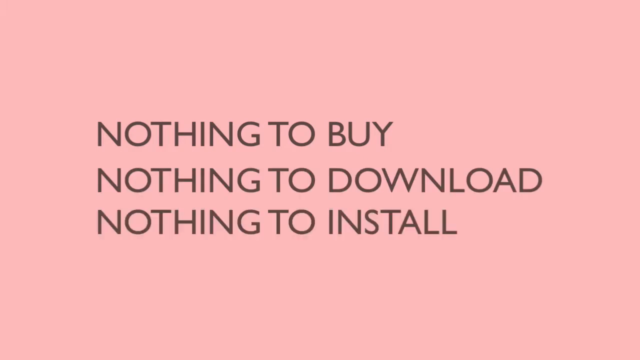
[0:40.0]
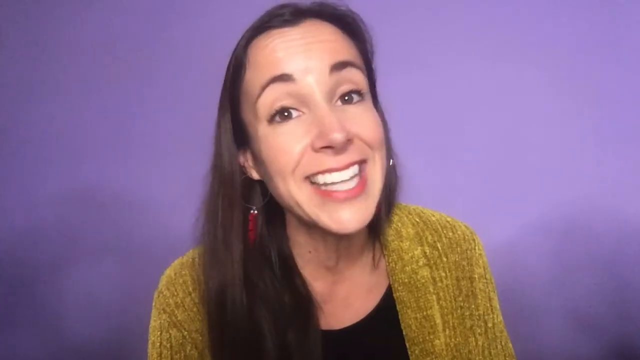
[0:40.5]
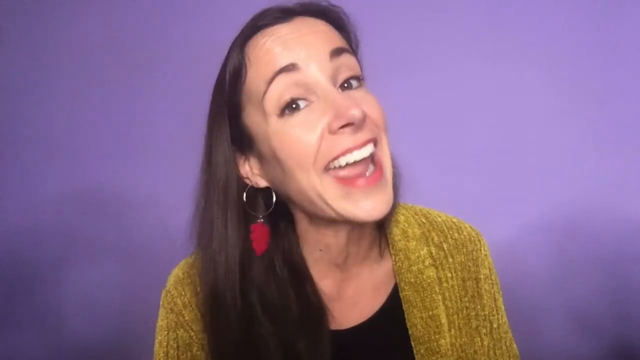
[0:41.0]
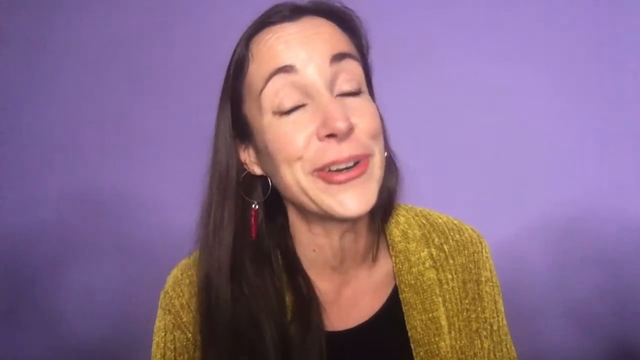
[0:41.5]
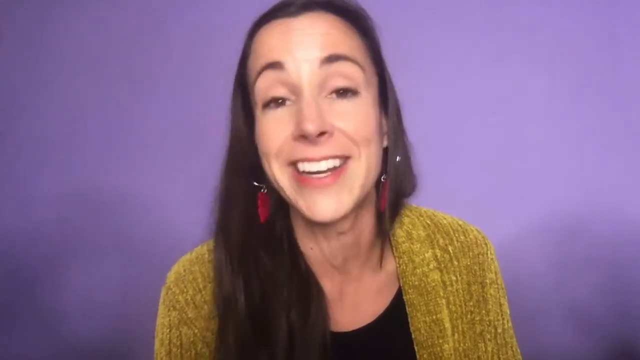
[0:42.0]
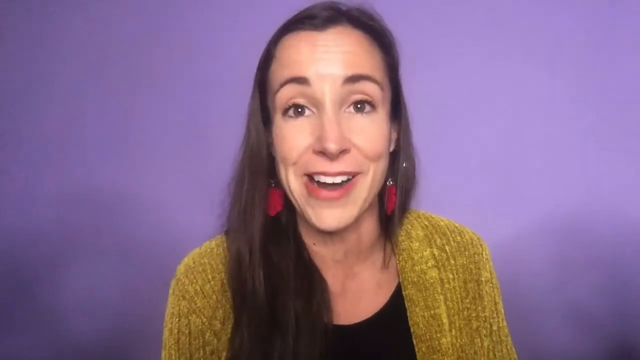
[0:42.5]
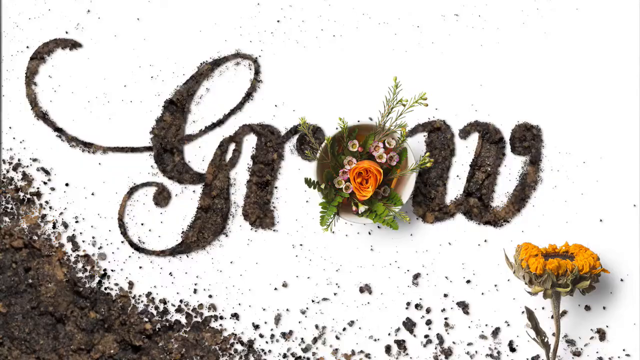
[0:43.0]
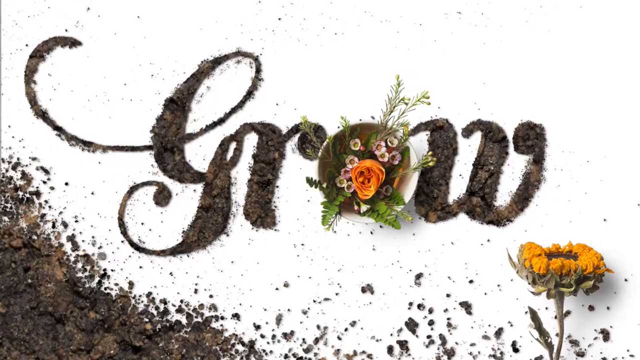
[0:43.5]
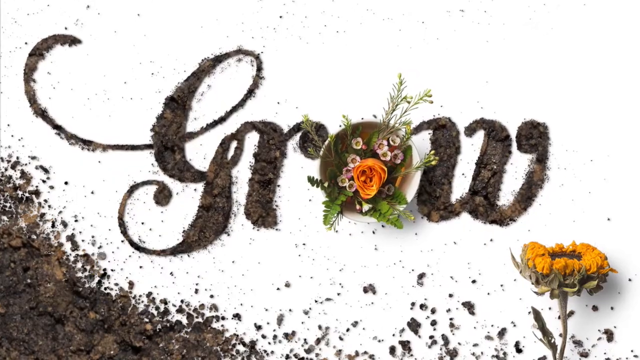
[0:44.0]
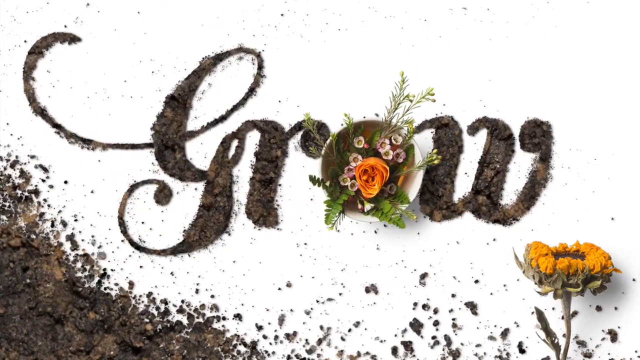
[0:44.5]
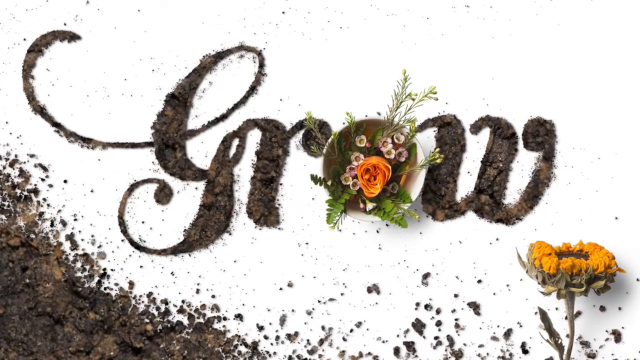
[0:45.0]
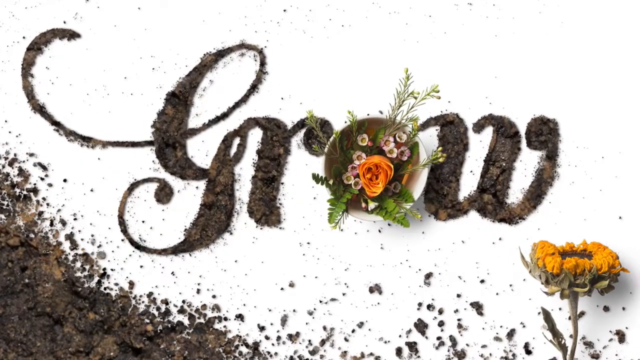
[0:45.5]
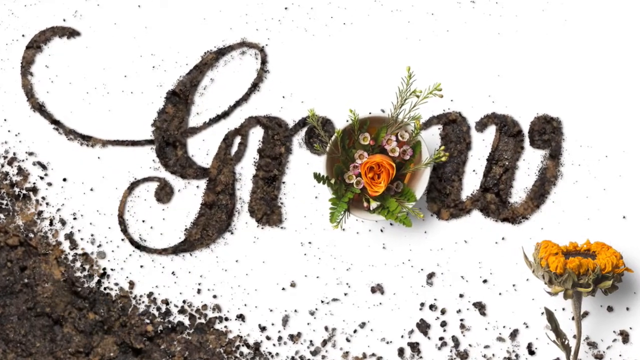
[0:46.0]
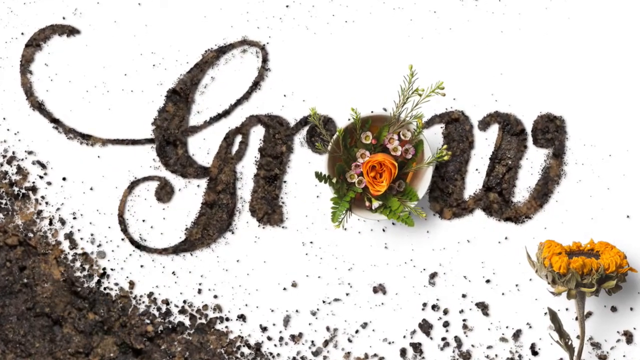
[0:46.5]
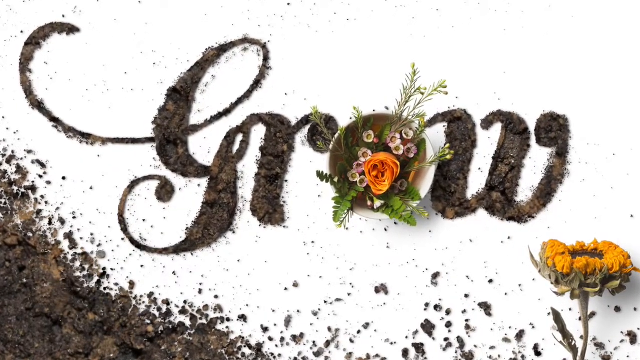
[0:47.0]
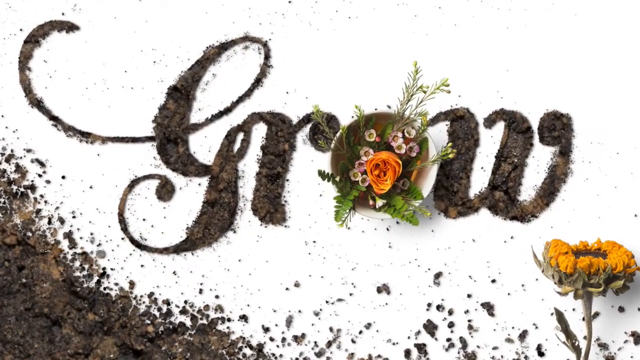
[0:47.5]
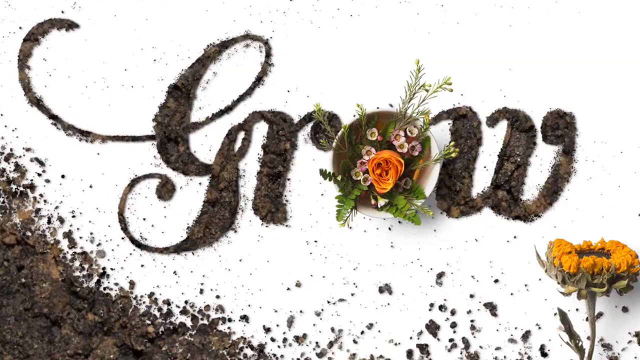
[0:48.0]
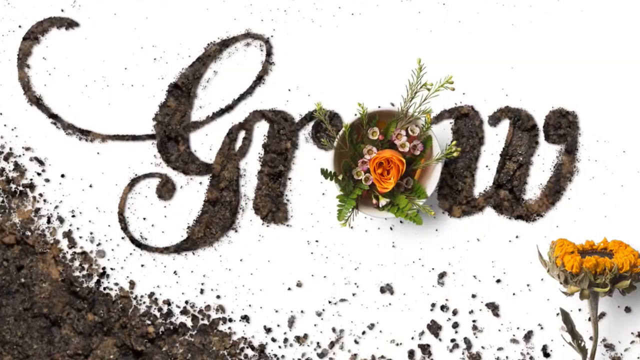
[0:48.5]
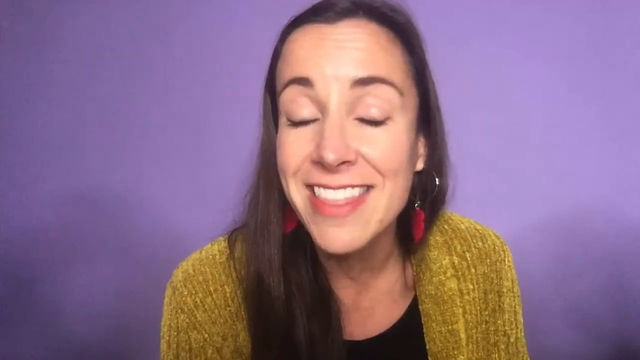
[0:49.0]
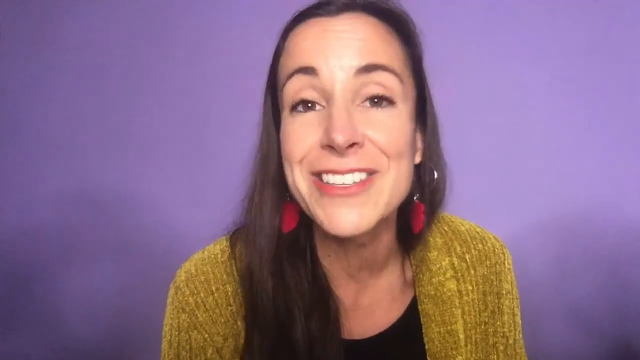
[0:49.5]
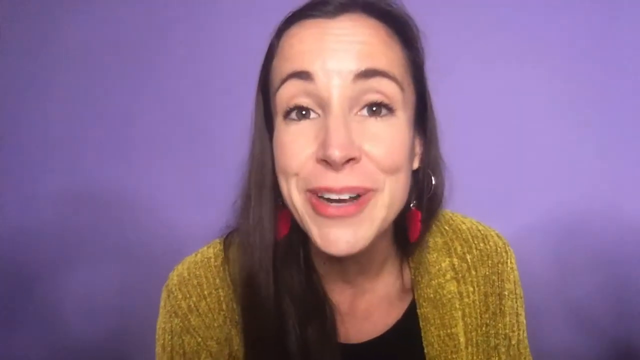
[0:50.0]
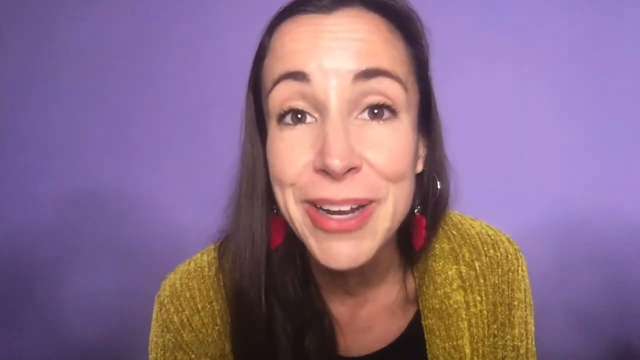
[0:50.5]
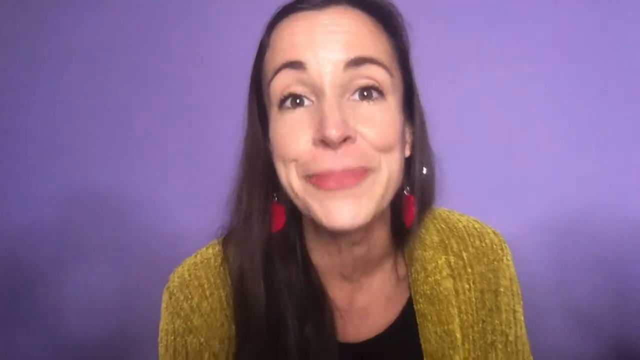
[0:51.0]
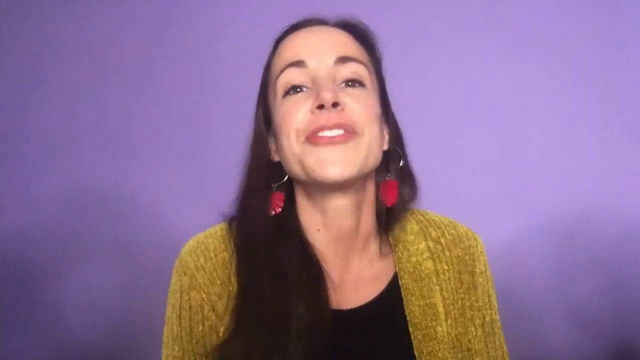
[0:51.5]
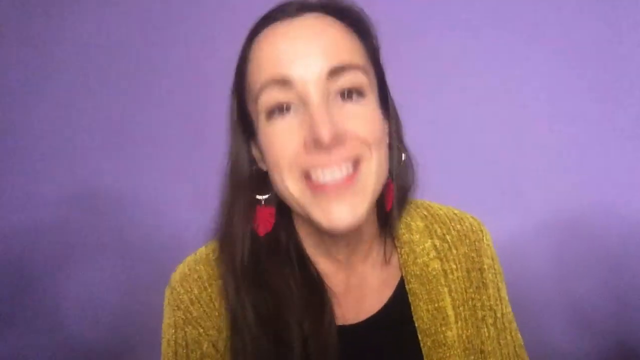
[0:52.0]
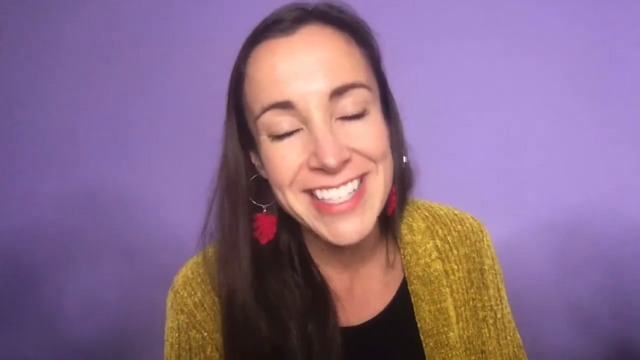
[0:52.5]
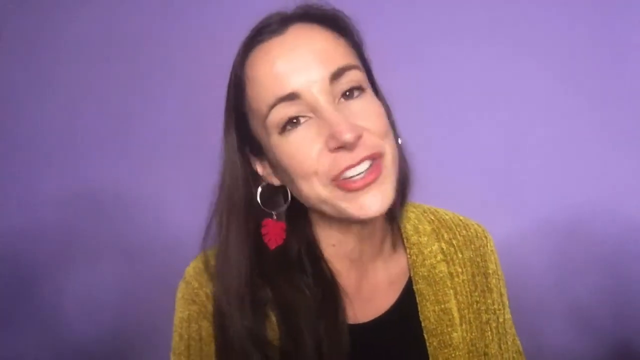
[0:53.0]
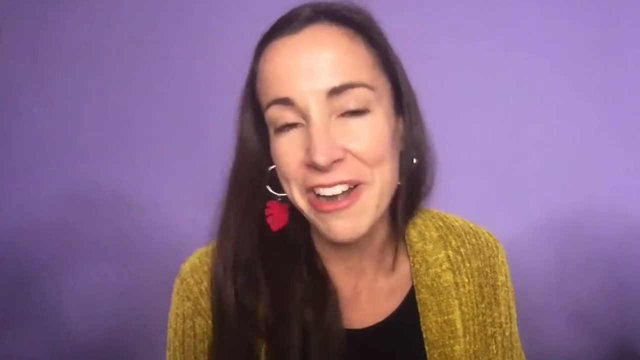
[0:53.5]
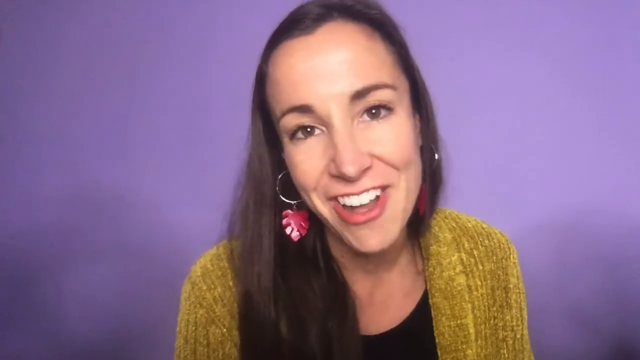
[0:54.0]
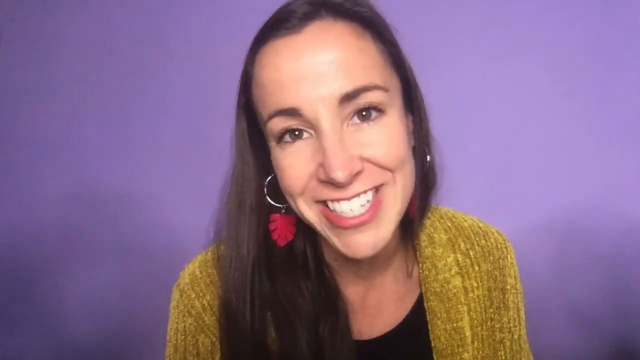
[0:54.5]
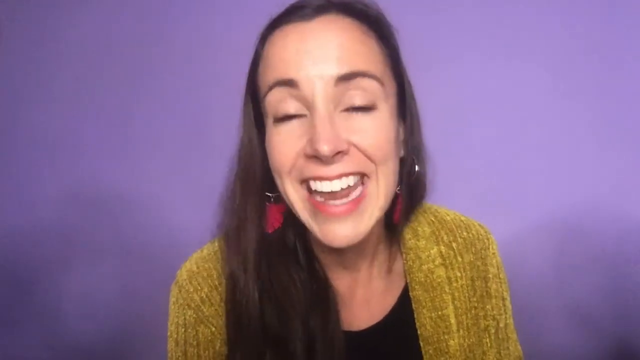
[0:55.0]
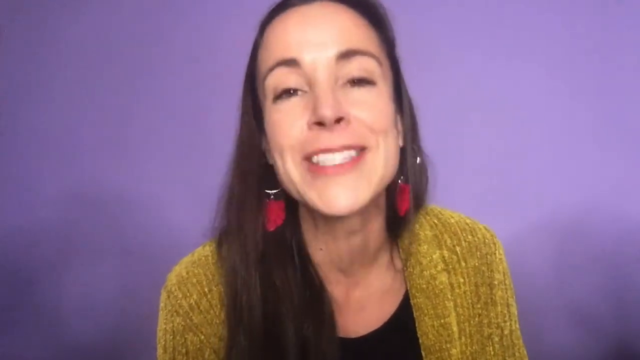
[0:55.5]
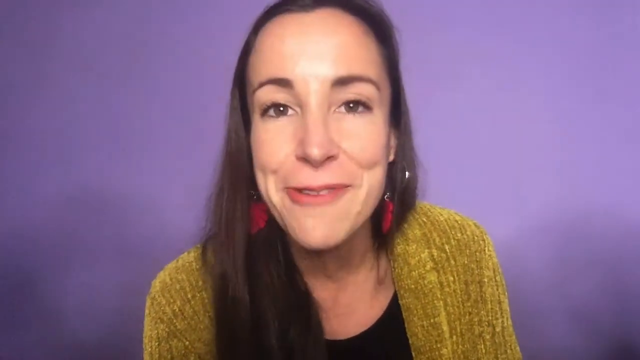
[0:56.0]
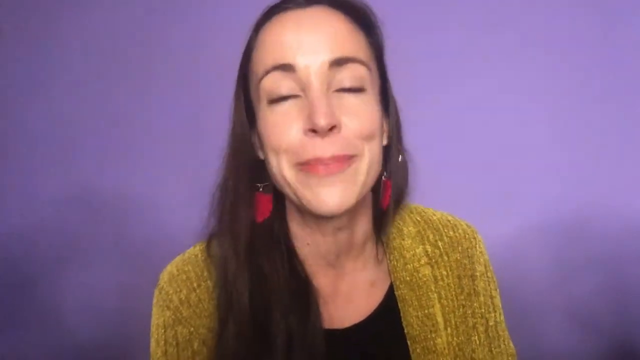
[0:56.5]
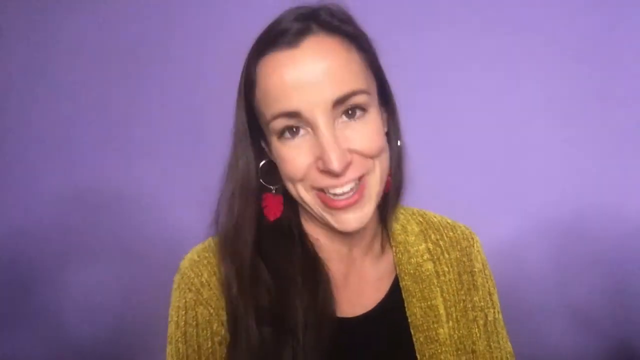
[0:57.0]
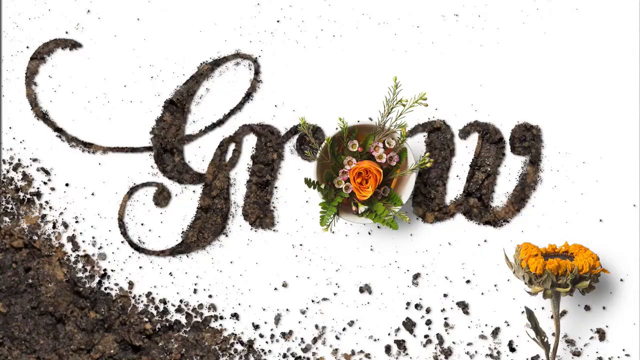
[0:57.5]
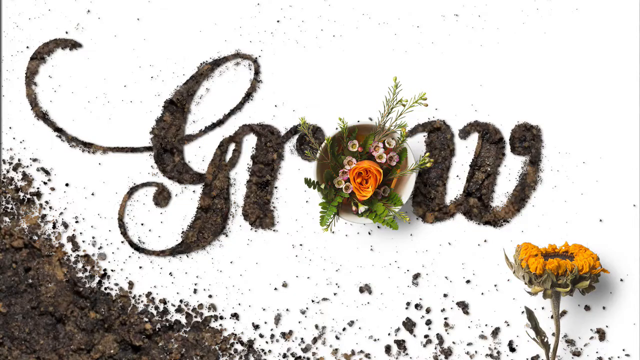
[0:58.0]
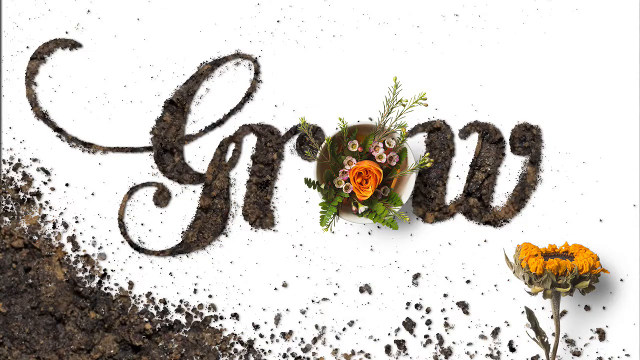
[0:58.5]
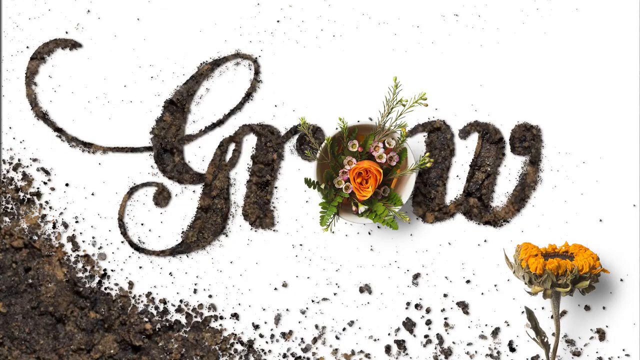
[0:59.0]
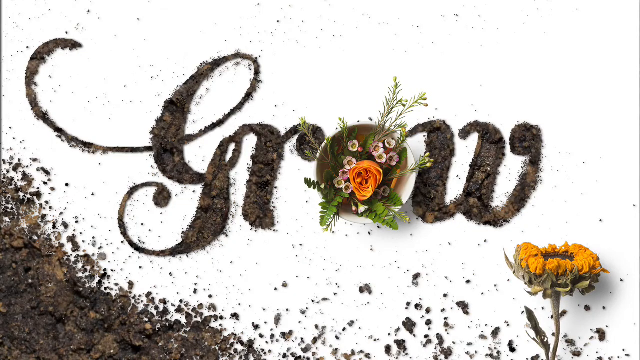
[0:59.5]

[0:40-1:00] A woman in a yellow top and a black dress, wearing maroon earrings and with long hair, appears on screen against a purple background. On the letter O there is a plate of flour; the flour is green and the background is white. In the bottom left is a heap of soil that looks like it was put there, and in the bottom right is a yellow flower that is embedded there. There is then slow movement toward the screen that looks like a zoom out. The woman appears again and looks to be happily talking about what just happened. The background remains purple and she wears the same clothing, a yellow top and a black dress, with the earrings still maroon and her long hair. The camera looks to be focusing on her as she talks, and a warm light is seen on her face.